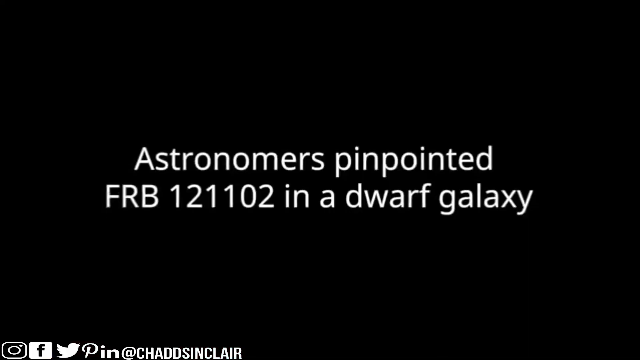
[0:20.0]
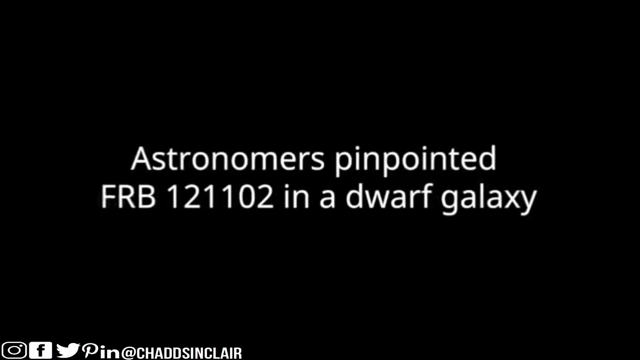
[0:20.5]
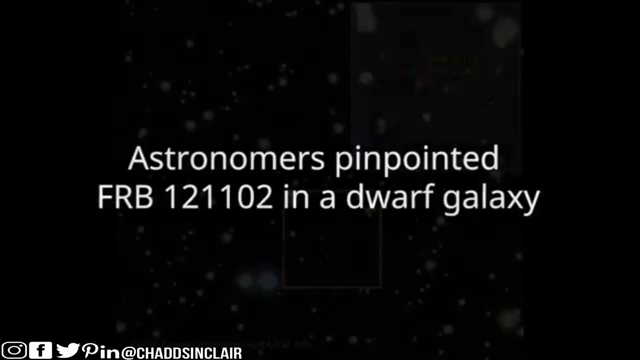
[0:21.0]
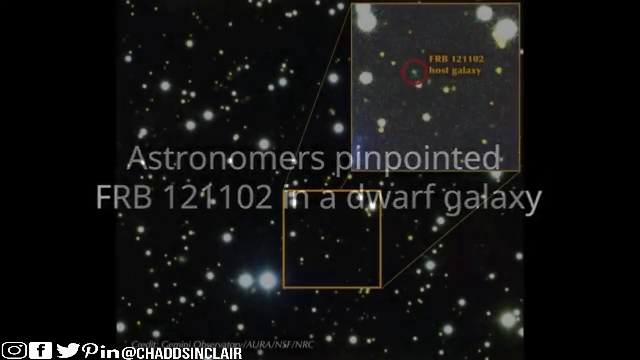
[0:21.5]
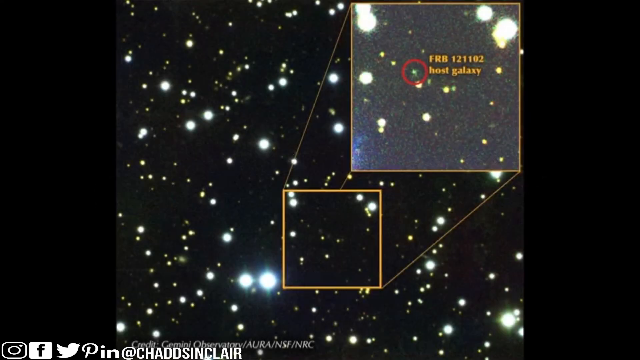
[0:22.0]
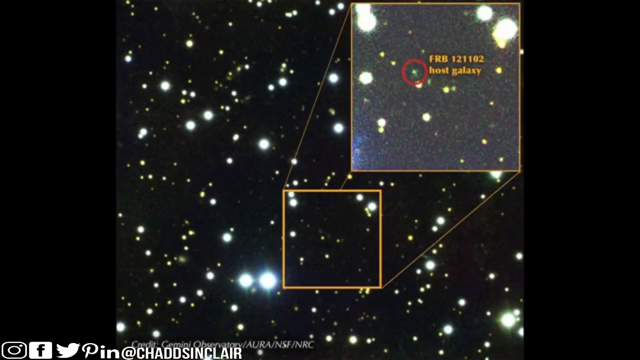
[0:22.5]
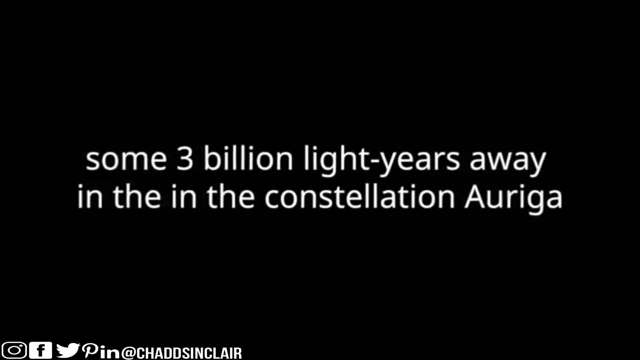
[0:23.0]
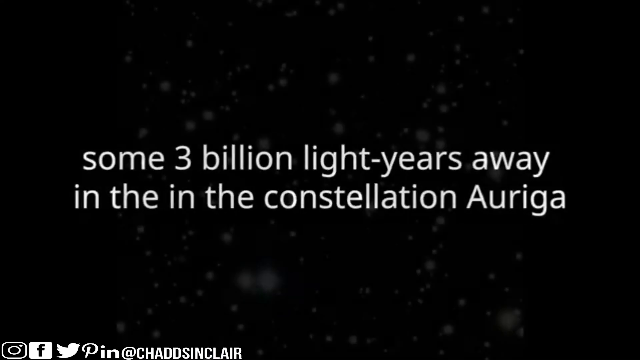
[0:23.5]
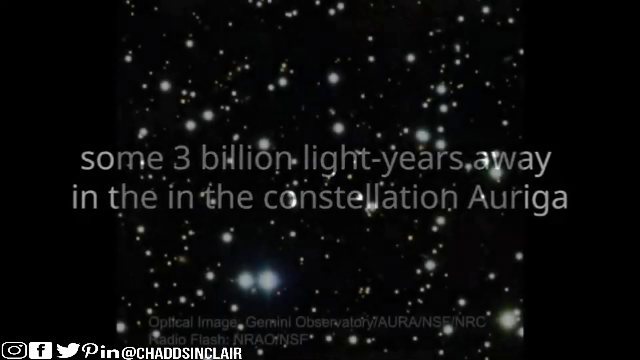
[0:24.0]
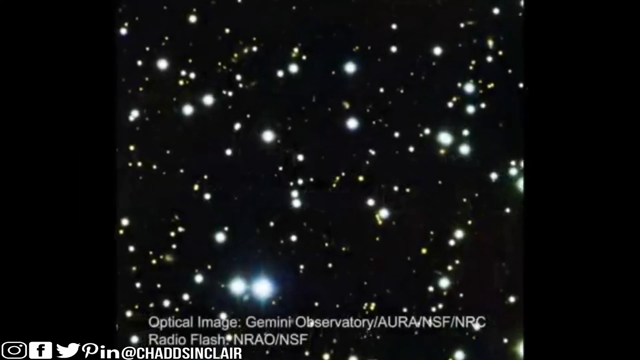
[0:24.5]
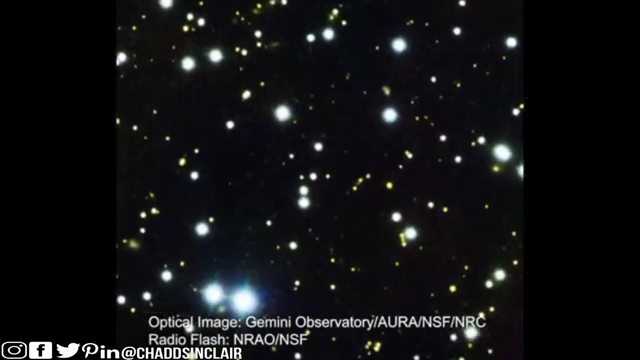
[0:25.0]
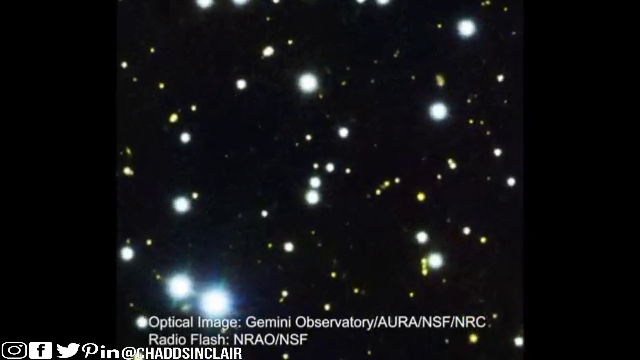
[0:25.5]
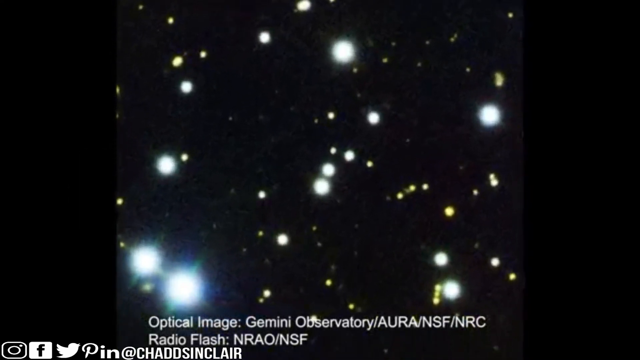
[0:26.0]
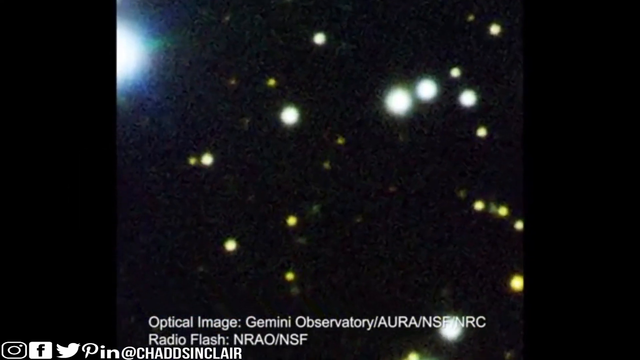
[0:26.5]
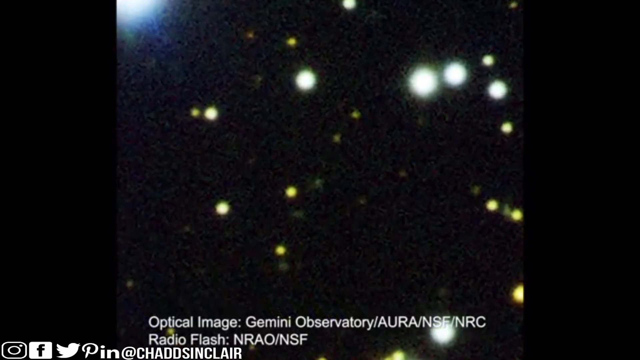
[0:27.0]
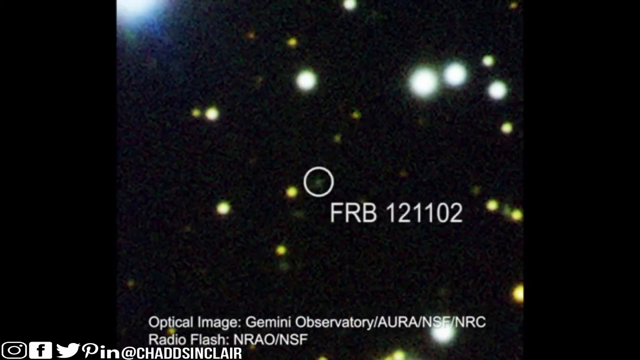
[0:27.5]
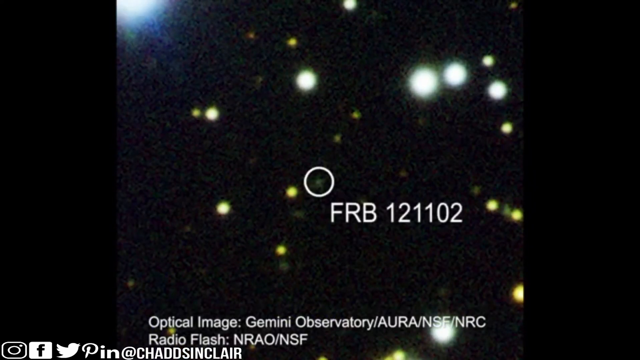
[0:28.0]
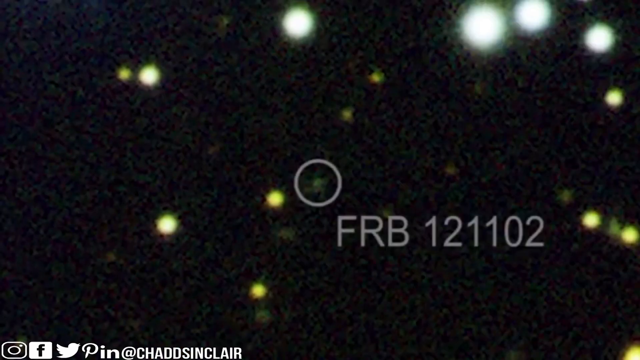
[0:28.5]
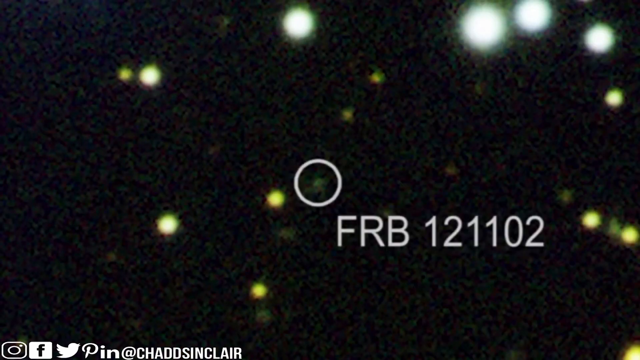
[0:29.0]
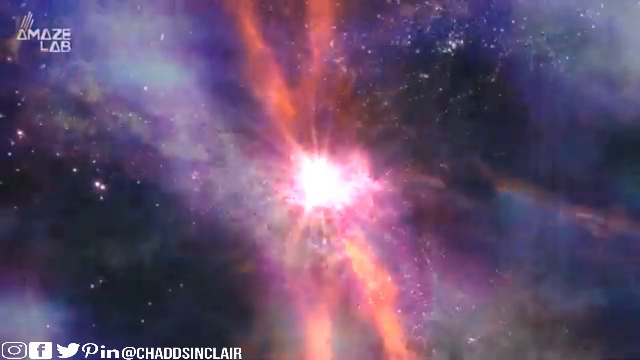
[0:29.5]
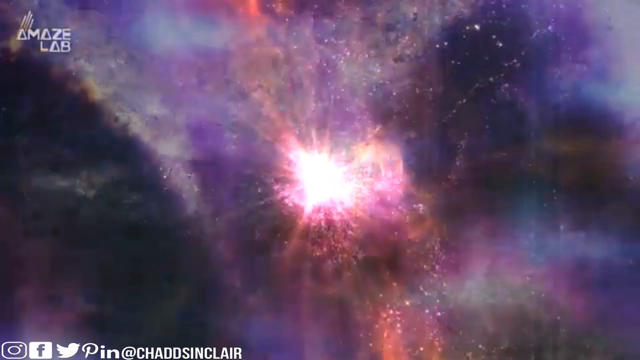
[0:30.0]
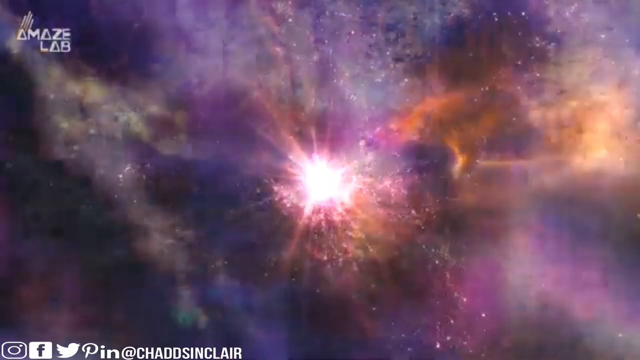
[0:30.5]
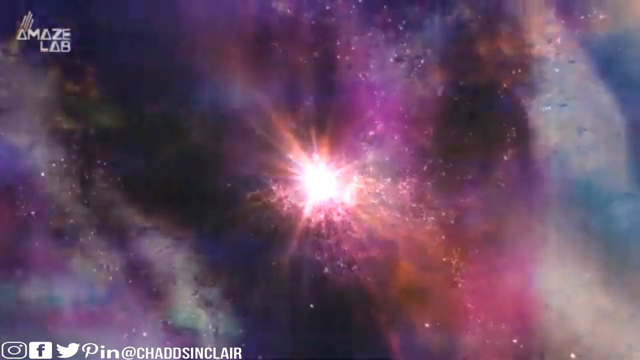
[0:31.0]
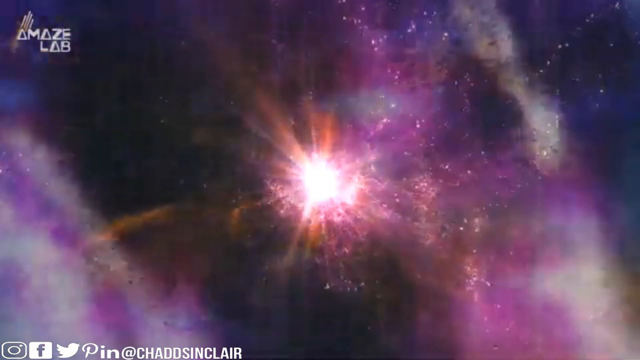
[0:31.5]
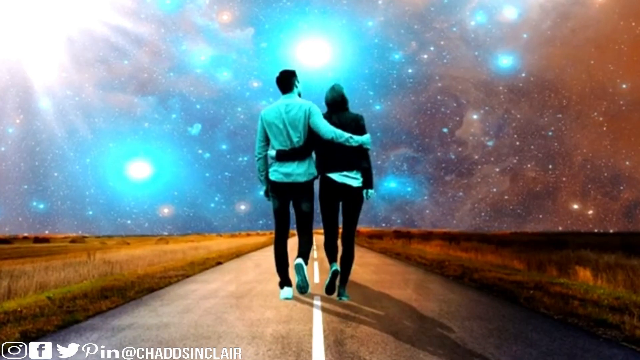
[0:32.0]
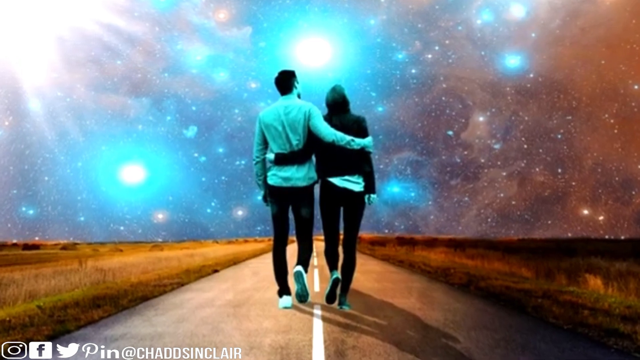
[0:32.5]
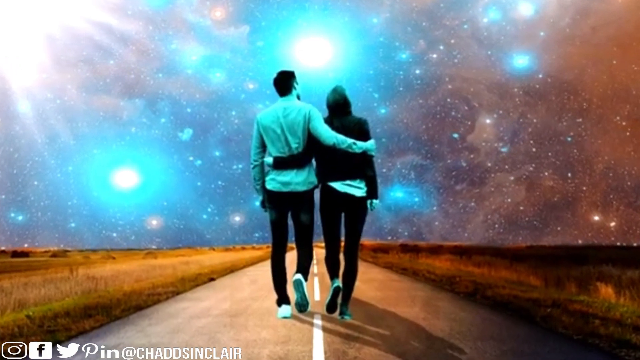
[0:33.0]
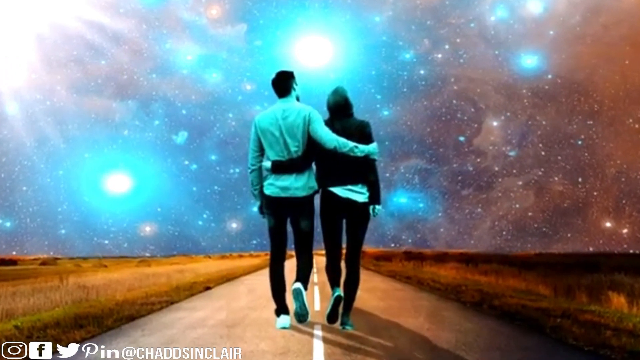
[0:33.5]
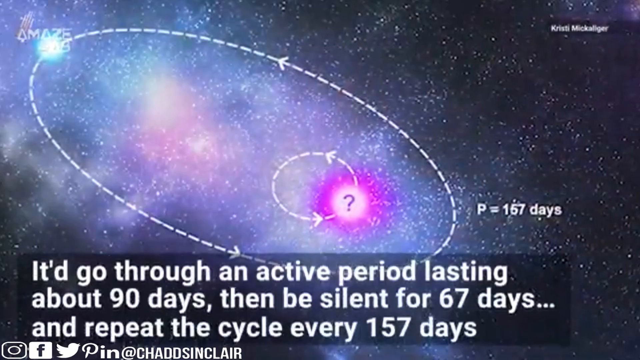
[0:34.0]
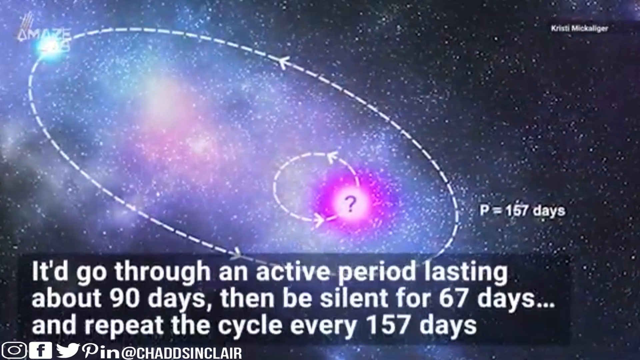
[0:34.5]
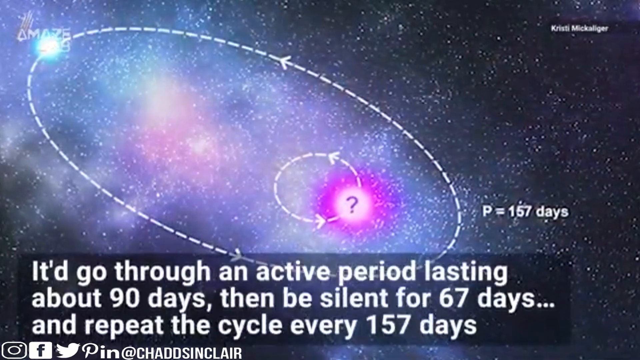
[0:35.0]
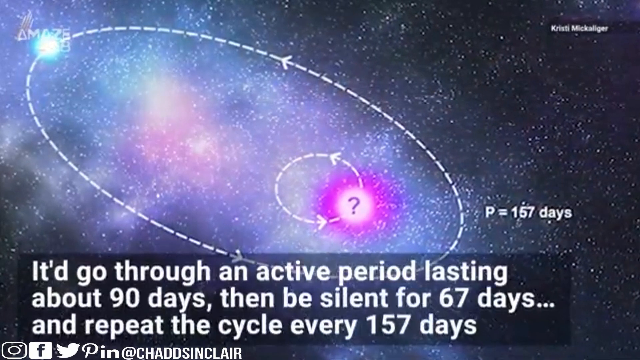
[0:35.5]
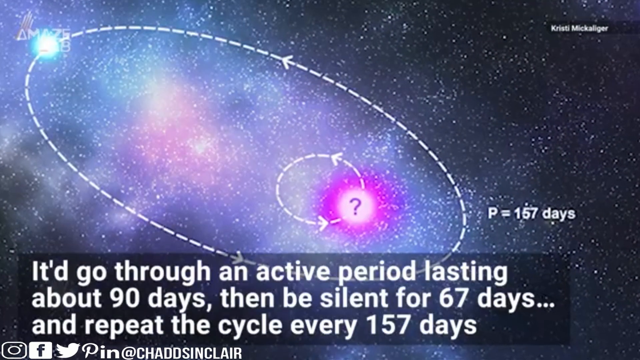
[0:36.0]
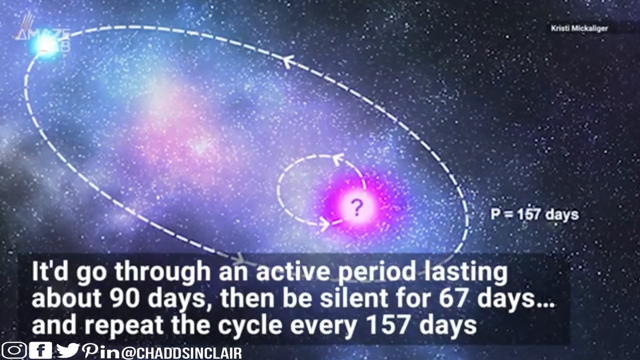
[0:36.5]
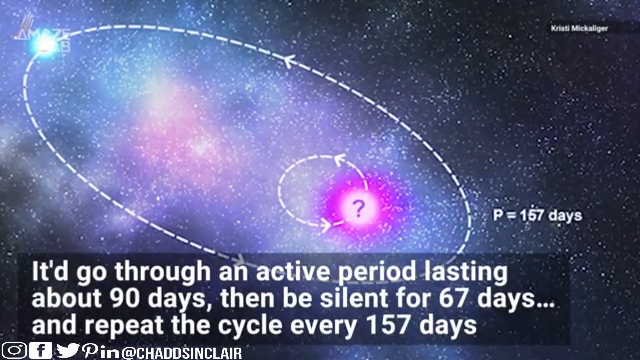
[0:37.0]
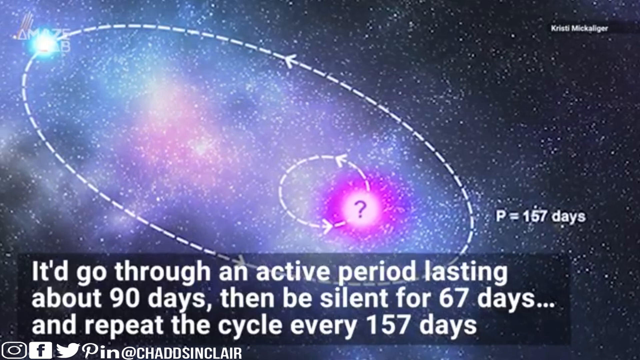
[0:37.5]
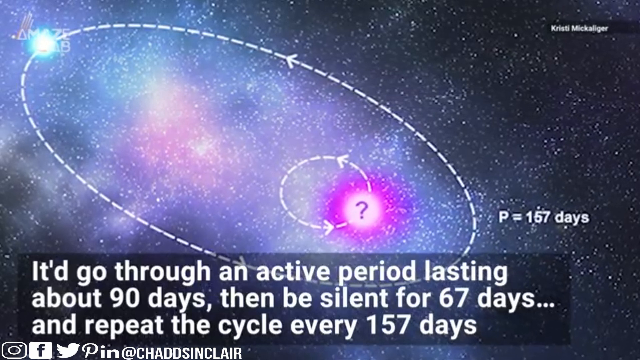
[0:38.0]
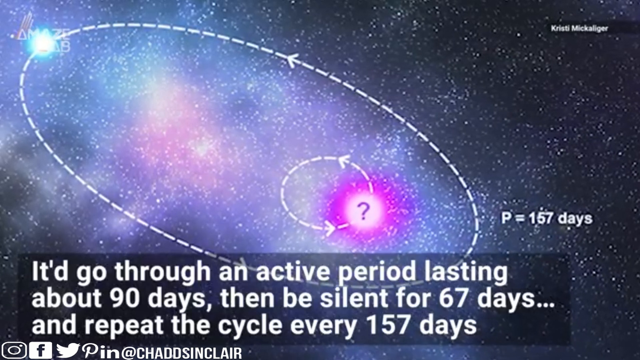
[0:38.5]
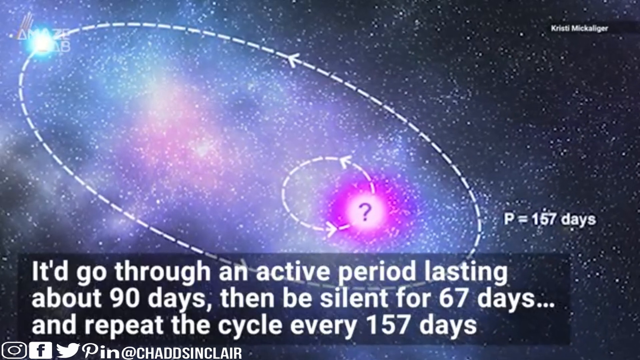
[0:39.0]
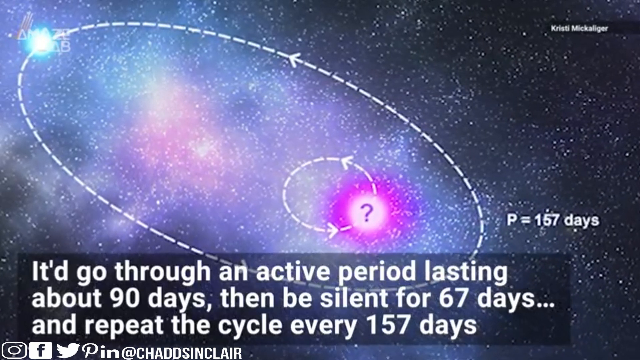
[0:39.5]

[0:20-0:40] On a black background, white text in the middle reads "Astronomers pinpointed", then "FRB 121102", then "in a dwarf galaxy". More words appear, including "some 3 billion light-years away" and "in the constellation Auriga". Small bright stars appear, and a circle marks where FRB 121102 is. A galaxy is shown with "Amaze Labs" in the top left corner. Two people walk in, and text says it will go through an active period lasting 90 days, then be silent for 67 days... and repeat the cycle every 157 days. An oval with a circle inside it appears, and the circle has a question mark.